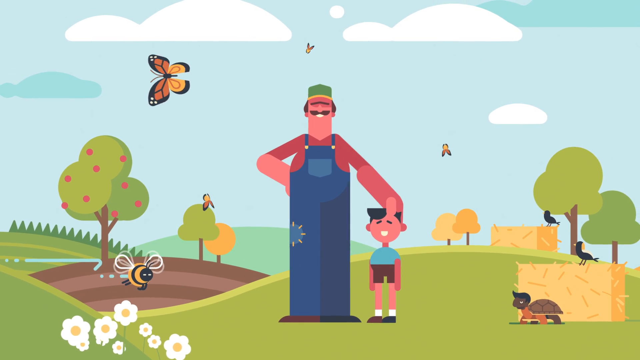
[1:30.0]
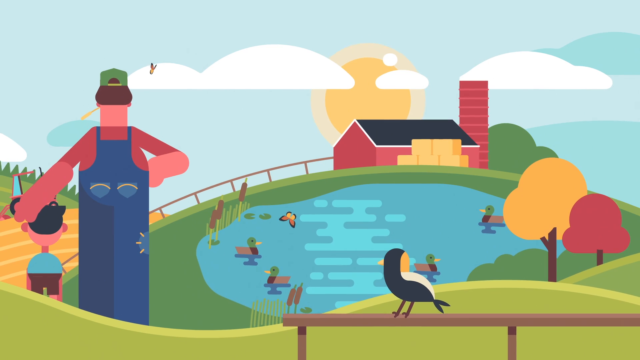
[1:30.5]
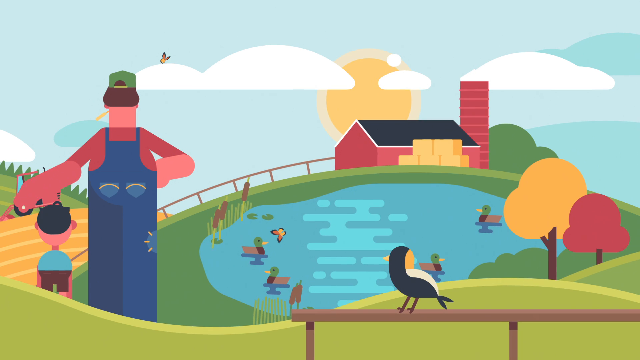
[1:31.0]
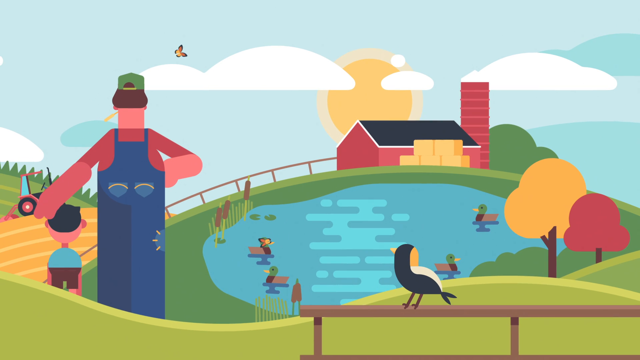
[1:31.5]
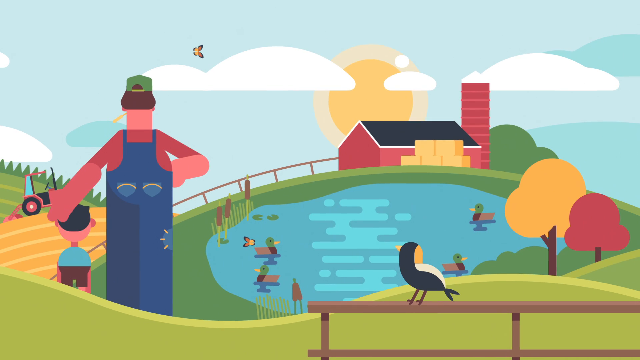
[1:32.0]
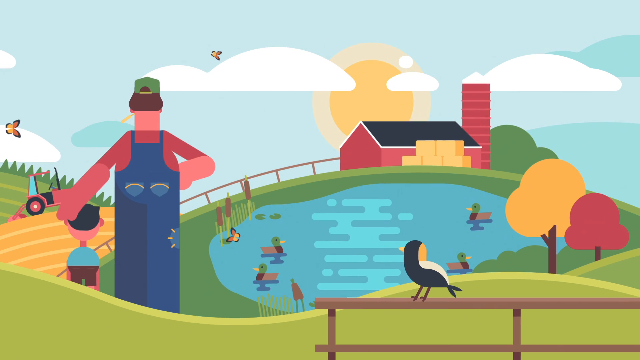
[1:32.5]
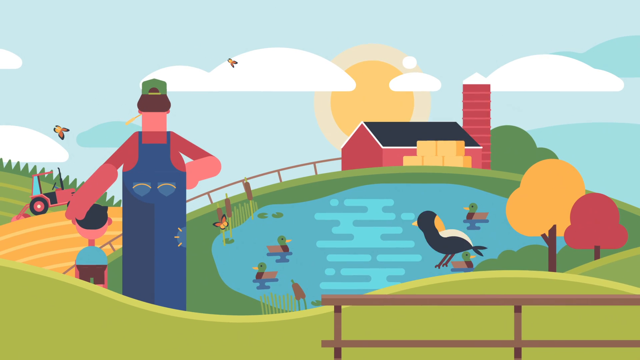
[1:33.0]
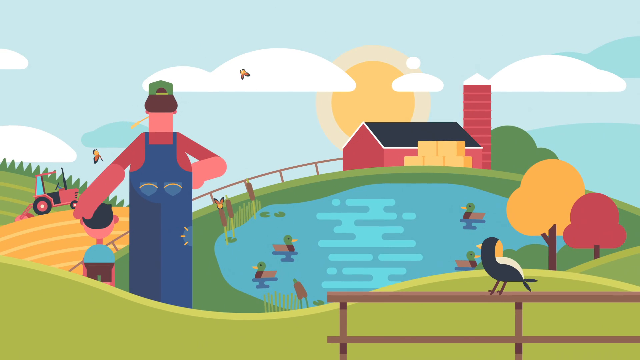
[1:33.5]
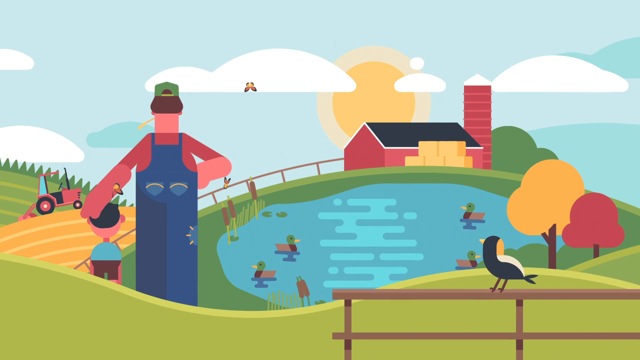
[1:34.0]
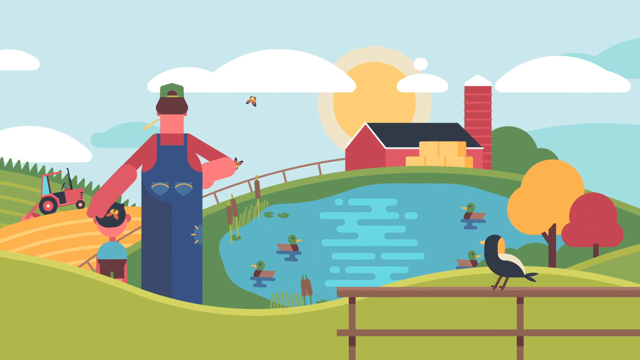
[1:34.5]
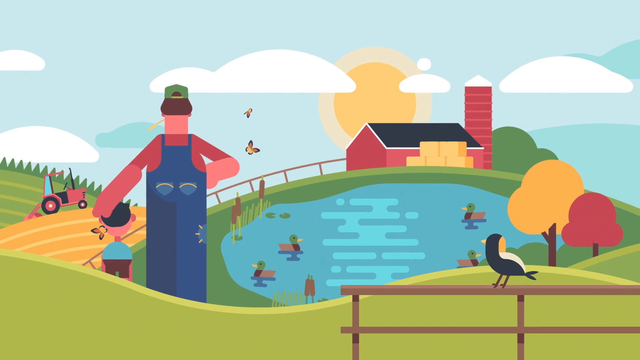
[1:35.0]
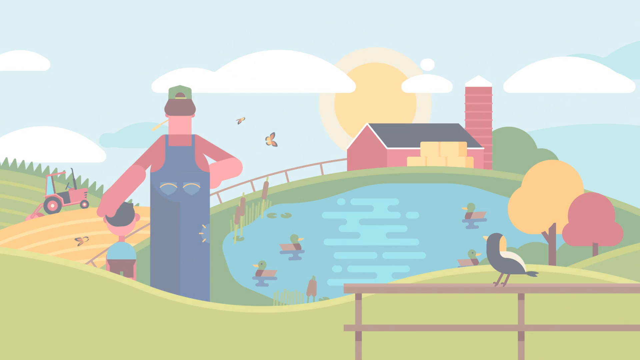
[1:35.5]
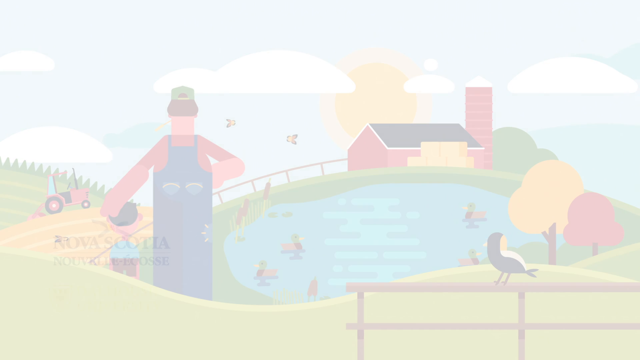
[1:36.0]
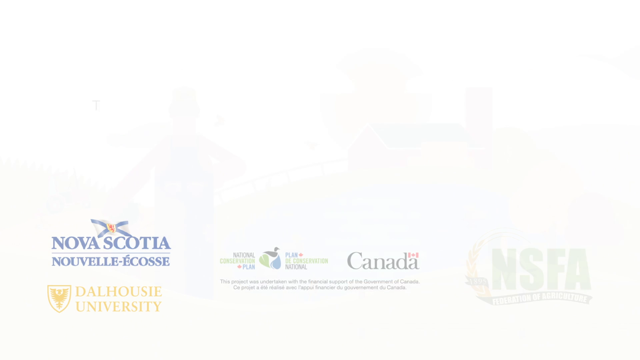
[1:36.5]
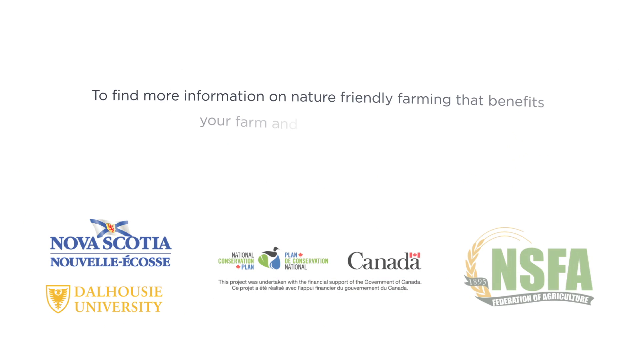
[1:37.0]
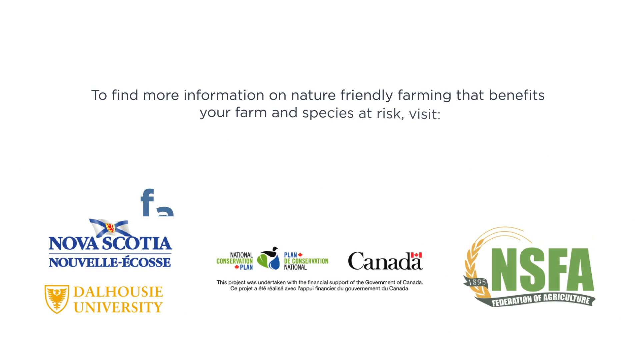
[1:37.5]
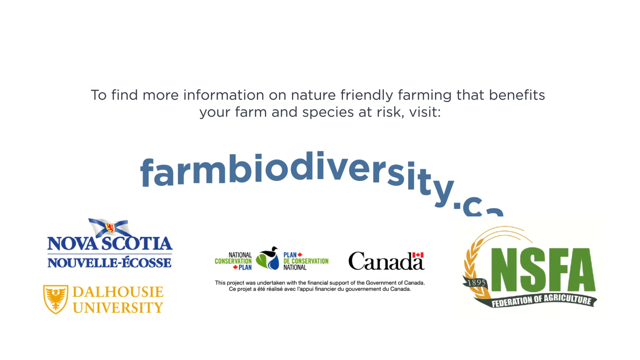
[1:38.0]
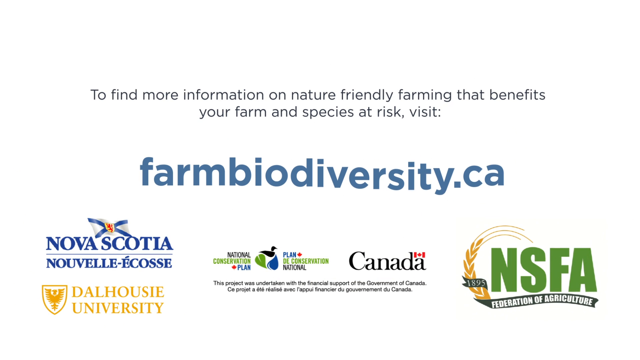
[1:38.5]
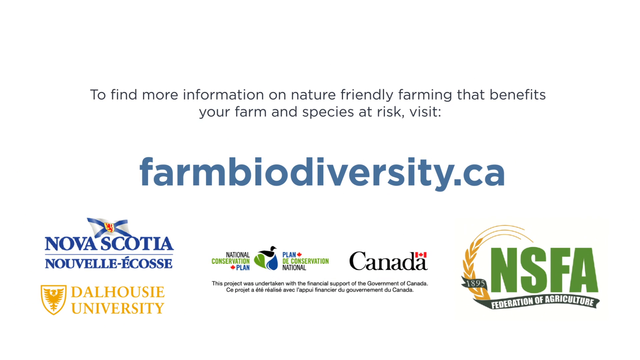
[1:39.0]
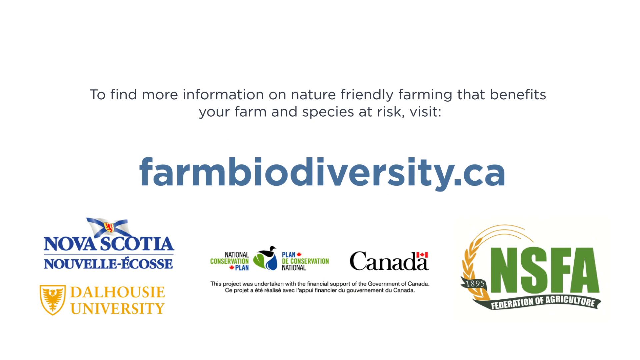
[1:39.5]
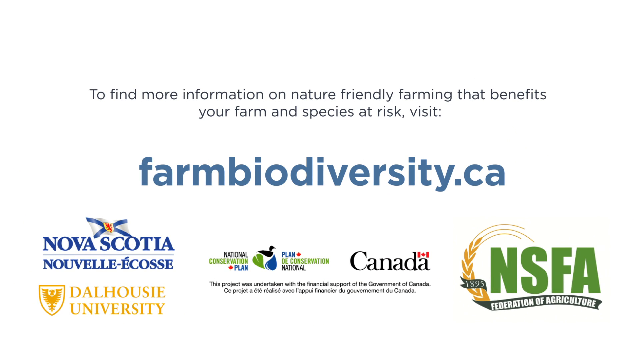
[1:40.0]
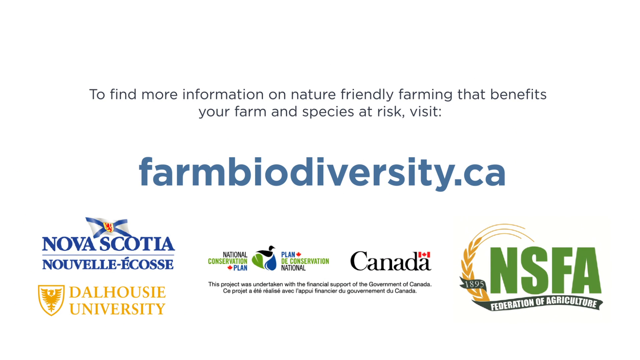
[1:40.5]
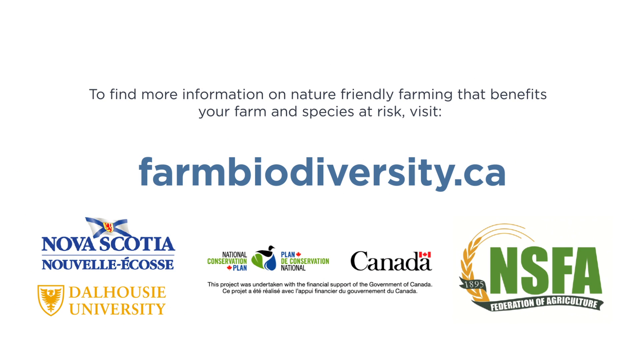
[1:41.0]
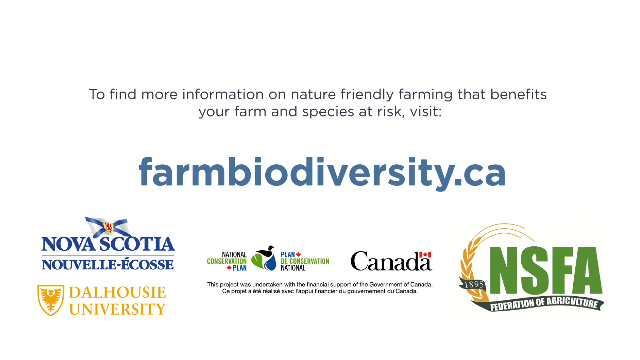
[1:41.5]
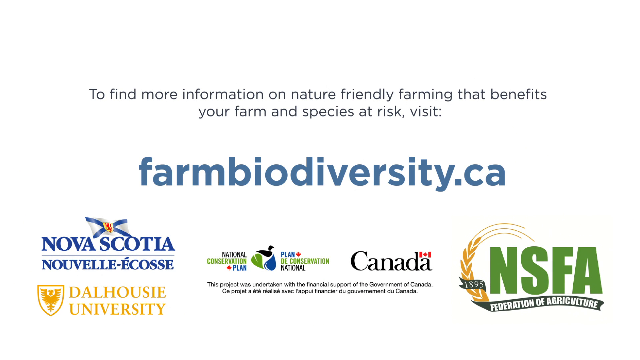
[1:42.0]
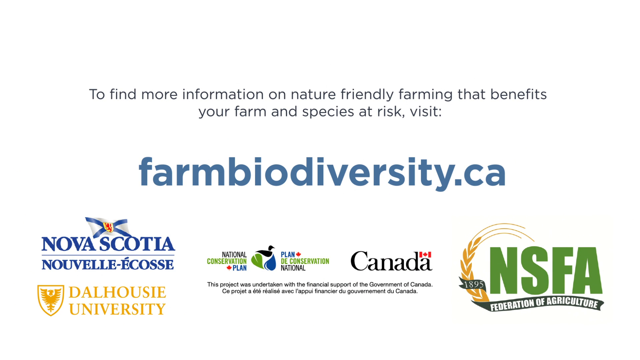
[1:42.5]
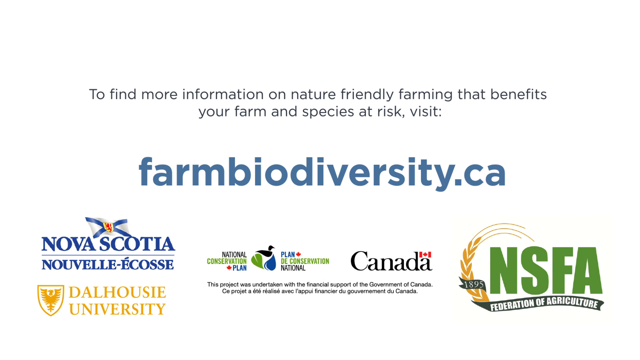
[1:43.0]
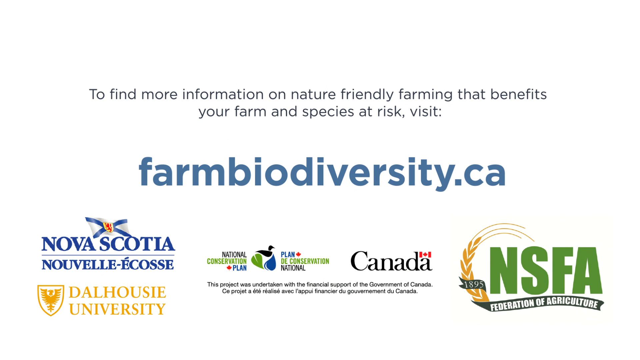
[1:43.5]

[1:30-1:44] The farmer and the boy look out at a field and a pond with four ducks. A house is in the background, the sun is lower in the sky, and there are three trees. The tractor is on the left side of the screen. A butterfly is flying, and a bird is on a brown fence just behind the boy and the farmer. The video then pans or zooms out to an end-credits text screen that says "to find more information on nature-friendly farming that benefits your farm and species at risk visit farmbiodiversity.ca". Sponsors follow: Nova Scotia, Dalhousie University, National Conservation Plan, Canada, and NSFA Federation of Agriculture.